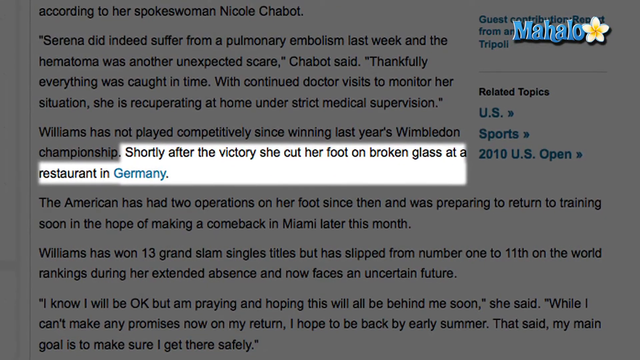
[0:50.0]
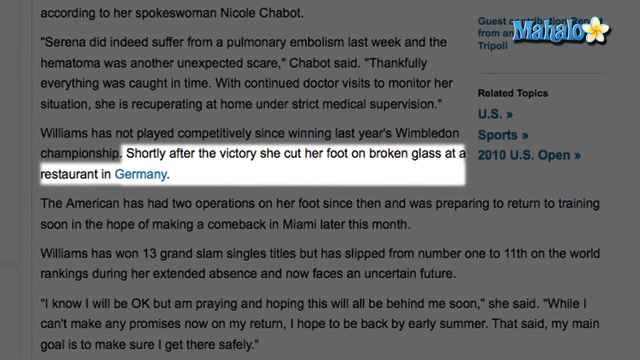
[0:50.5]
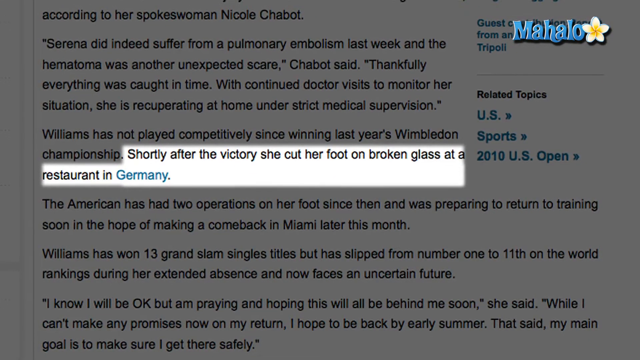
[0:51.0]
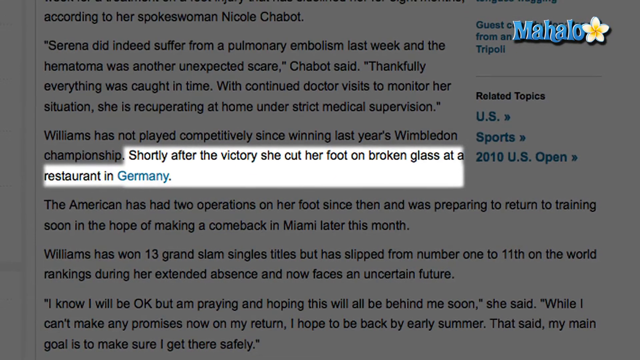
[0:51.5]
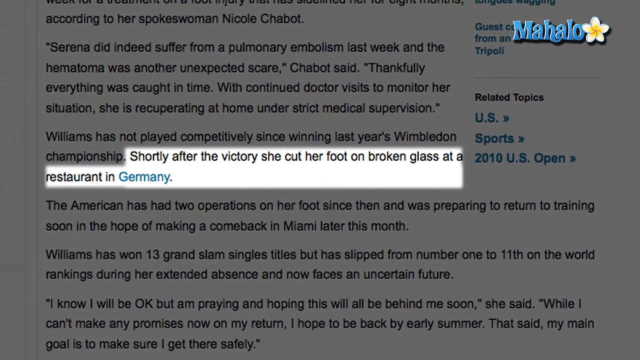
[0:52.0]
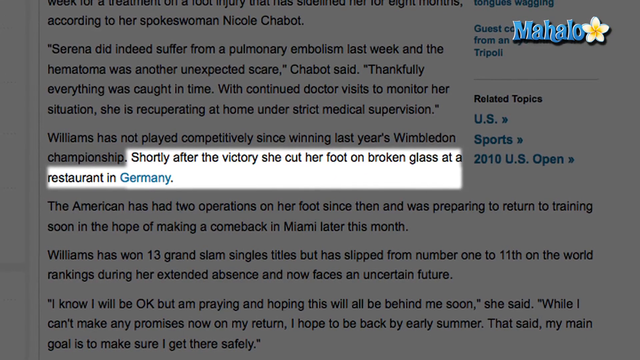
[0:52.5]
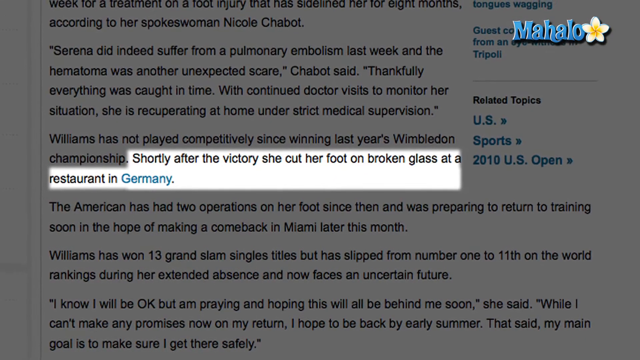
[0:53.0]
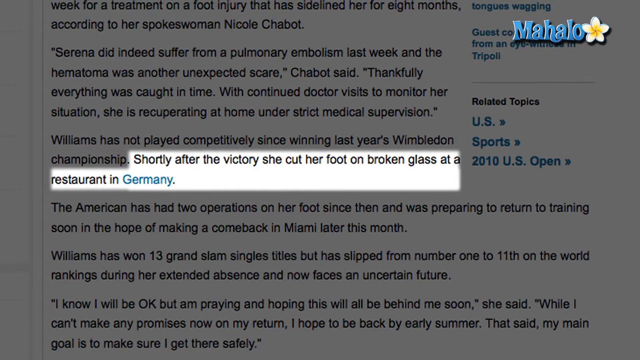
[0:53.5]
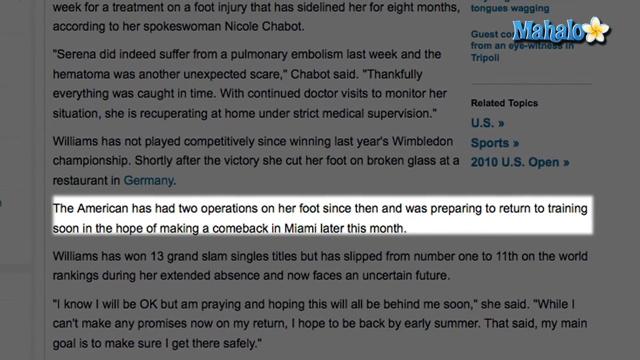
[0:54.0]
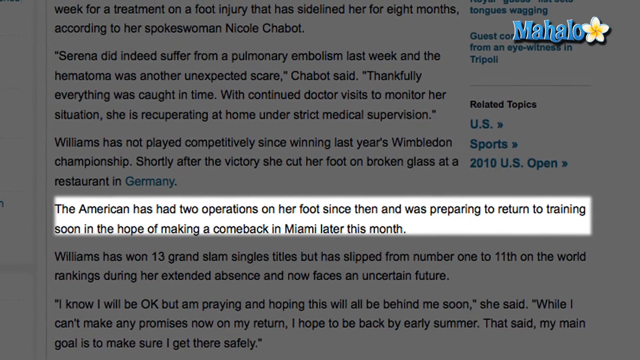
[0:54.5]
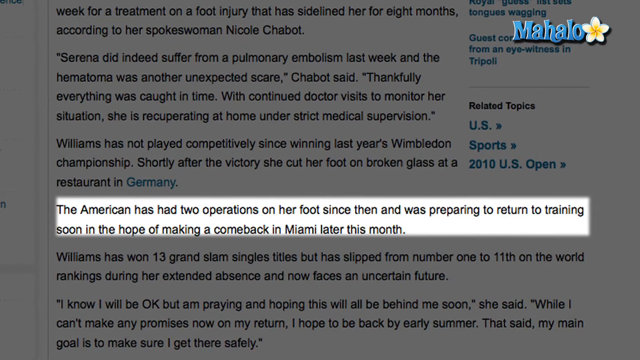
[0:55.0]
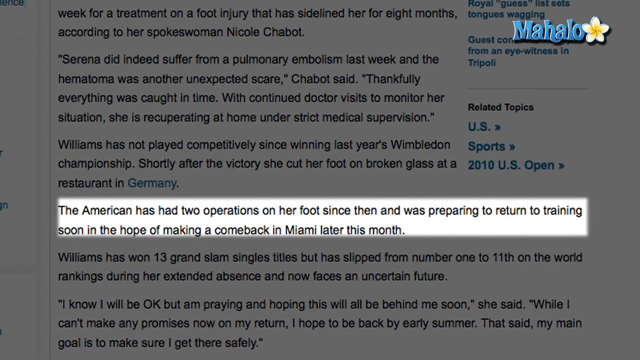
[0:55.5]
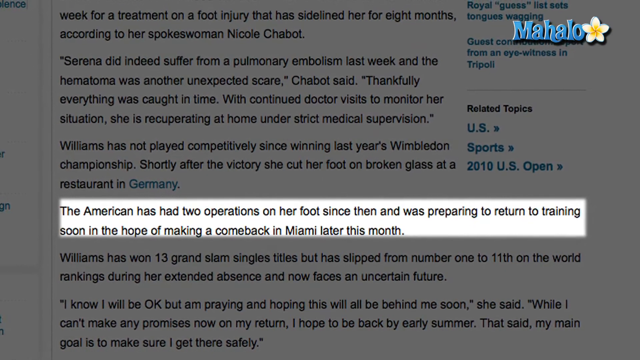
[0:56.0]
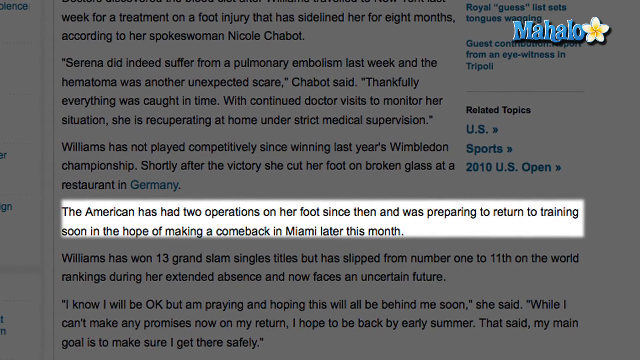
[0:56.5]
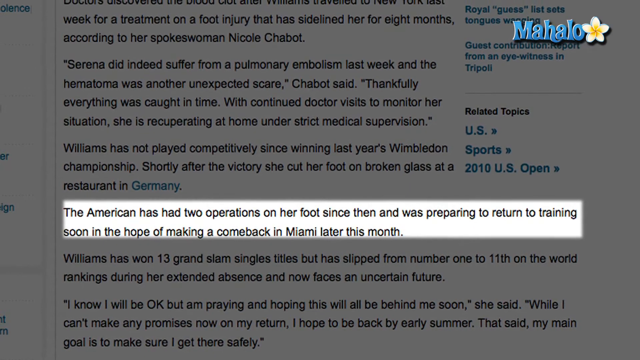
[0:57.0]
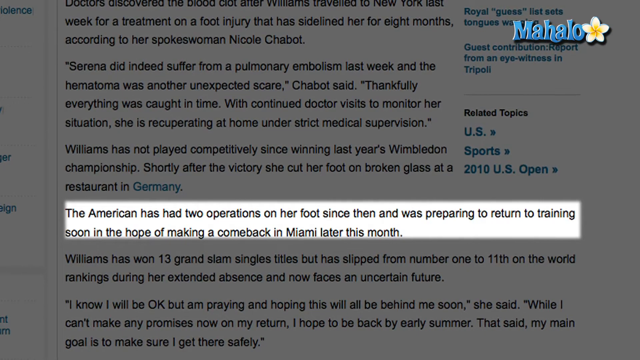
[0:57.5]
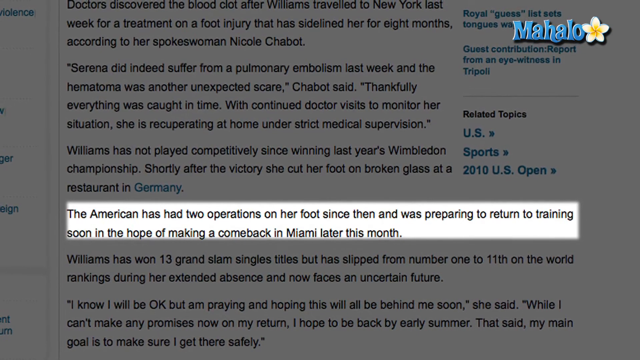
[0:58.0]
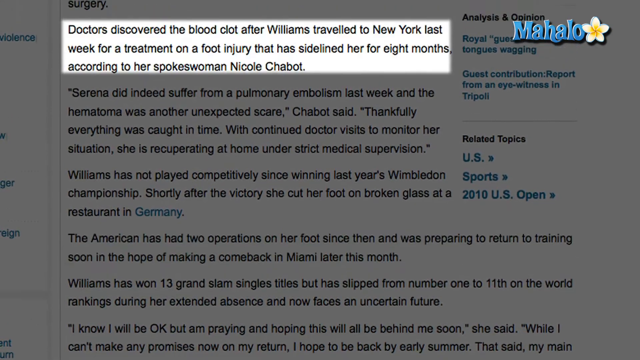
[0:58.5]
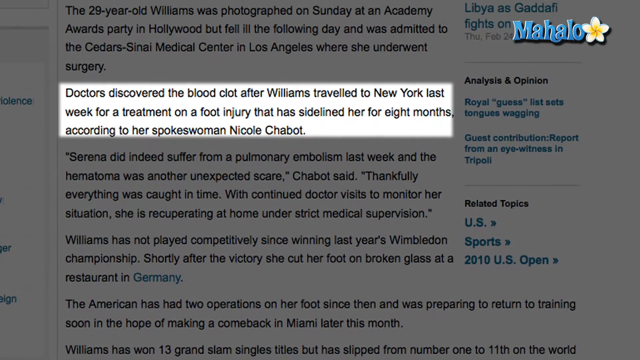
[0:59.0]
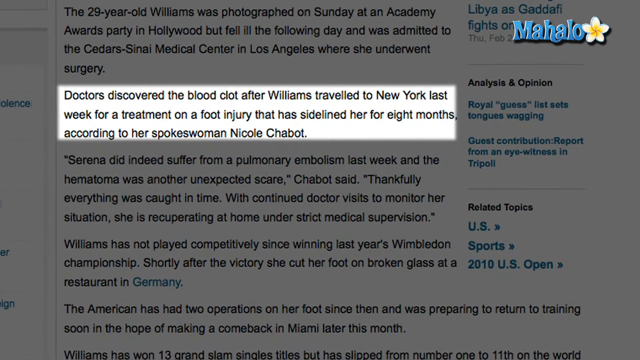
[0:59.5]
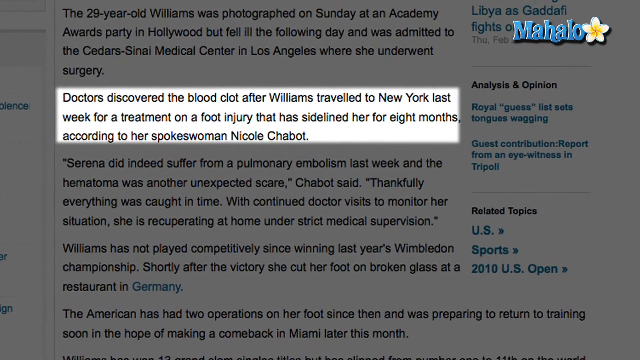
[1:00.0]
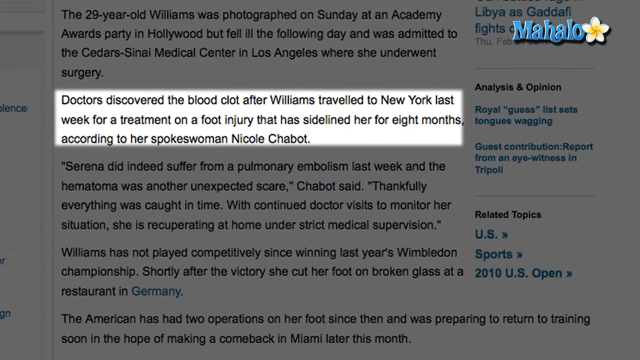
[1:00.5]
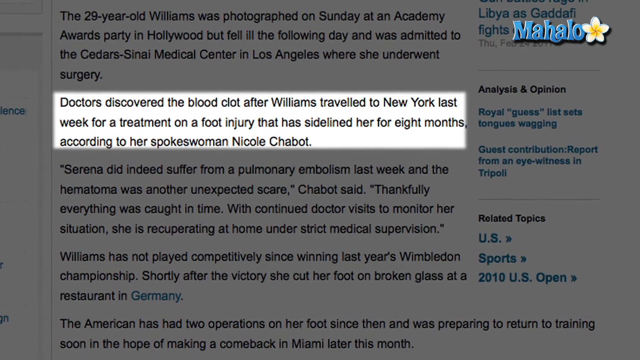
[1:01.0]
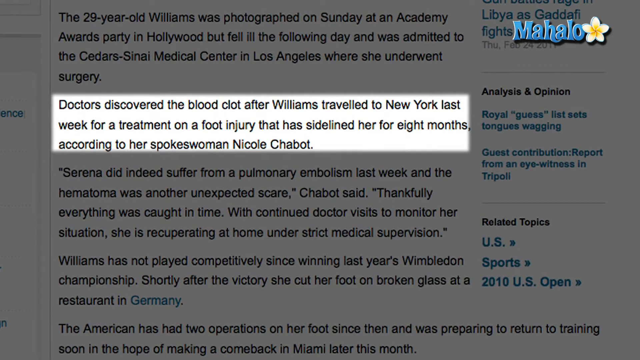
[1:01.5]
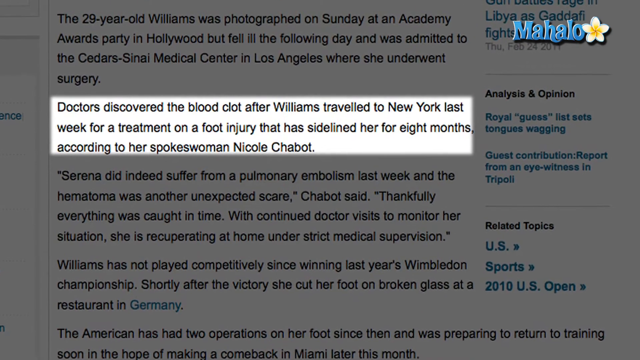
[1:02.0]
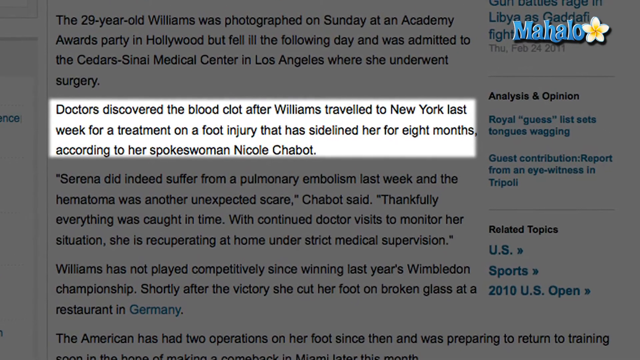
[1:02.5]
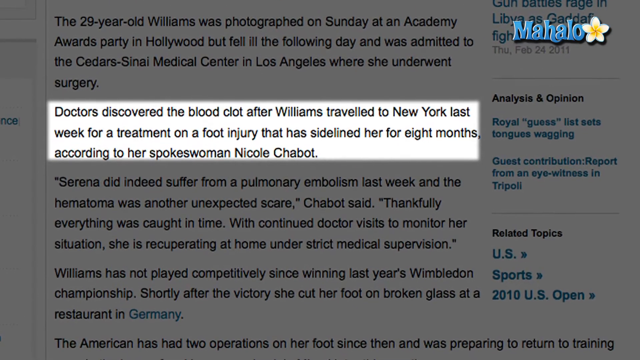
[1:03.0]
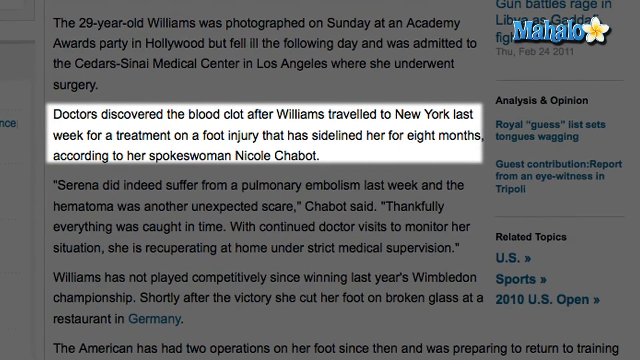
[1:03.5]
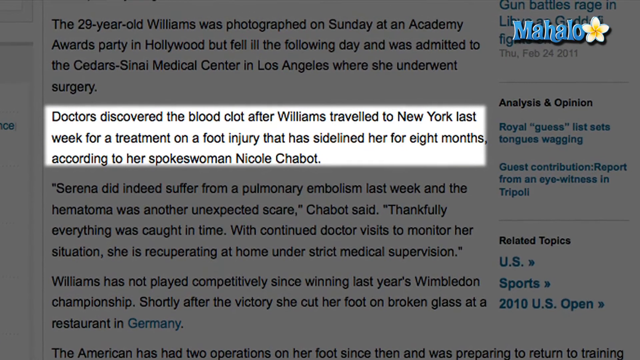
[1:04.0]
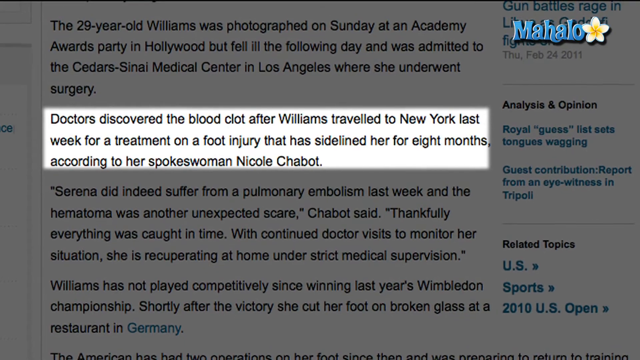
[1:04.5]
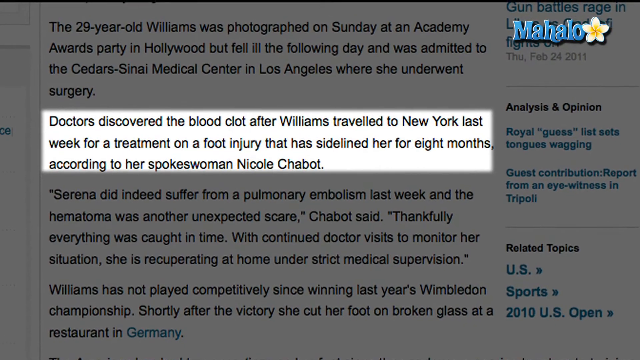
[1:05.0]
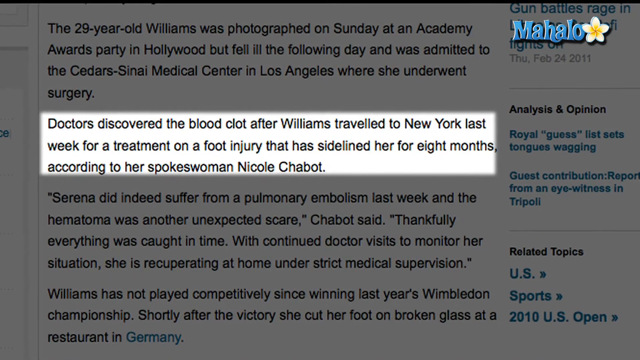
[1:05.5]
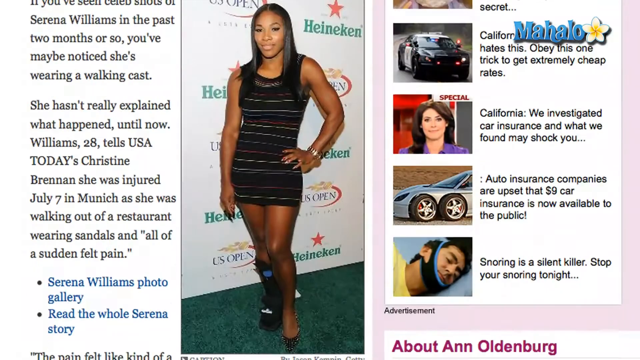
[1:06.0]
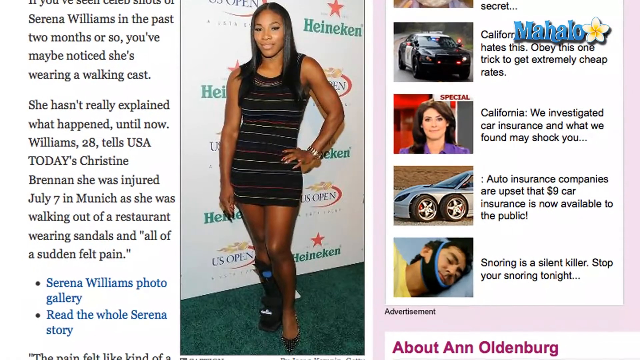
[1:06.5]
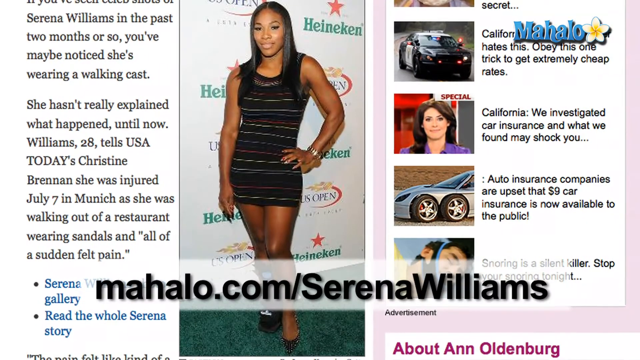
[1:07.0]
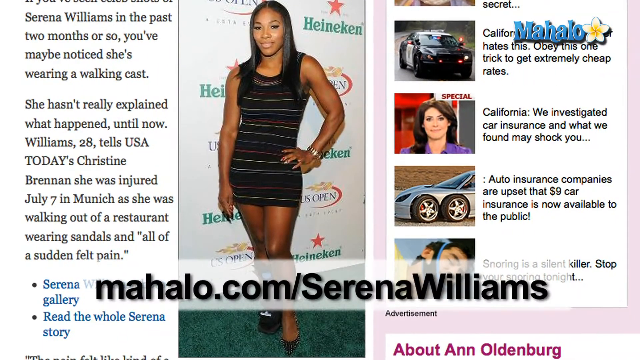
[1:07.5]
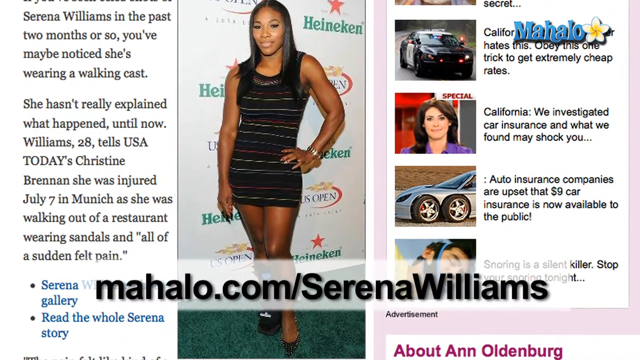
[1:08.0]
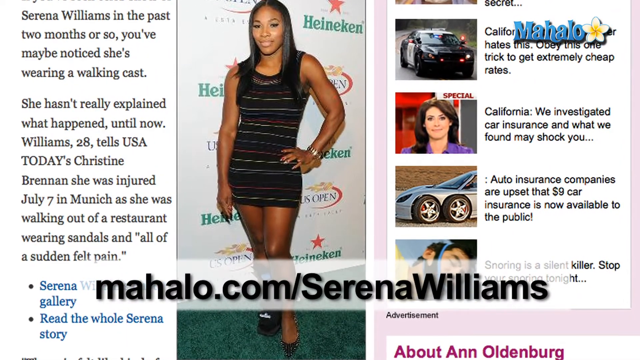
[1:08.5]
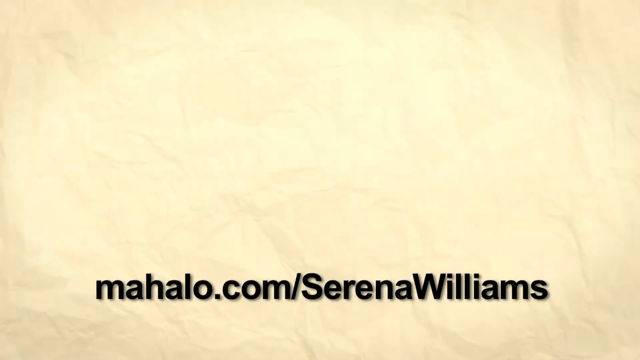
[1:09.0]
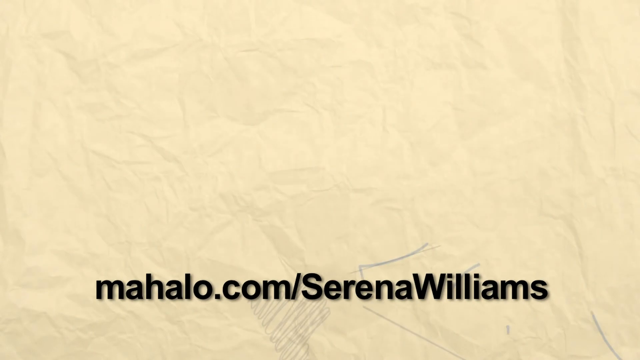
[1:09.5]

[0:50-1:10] A different article appears, titled "Serena Williams details foot injury", written by Anne Oldenburg on September 2nd, 2010. Its introduction reads: "if you've seen celeb shots of Serena Williams in the past two months or so, you've maybe noticed she's wearing a walking cast. She hasn't really explained what happened until now." It goes on to say that Williams, 28 years old, tells Christine Brennan she was injured July 7th in Munich as she was walking out of a restaurant wearing sandals and all of a sudden felt pain. Another article headline reads "Serena Williams wins Wimbledon in dominating performance". There is also apparently another article about her being back home after blood clot treatment.